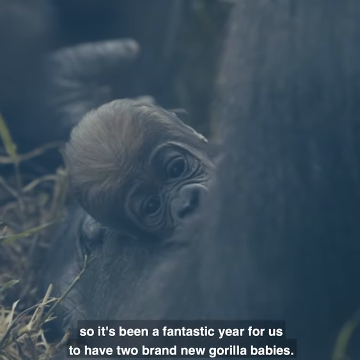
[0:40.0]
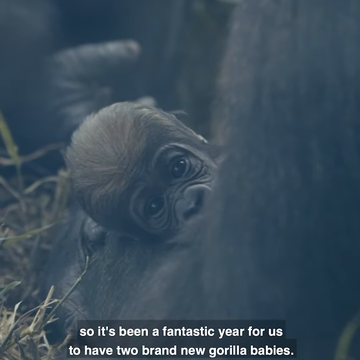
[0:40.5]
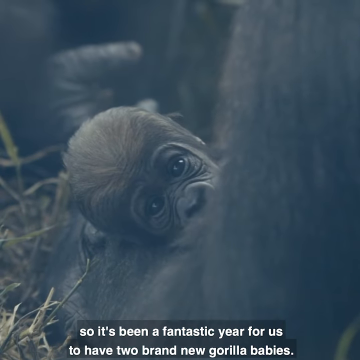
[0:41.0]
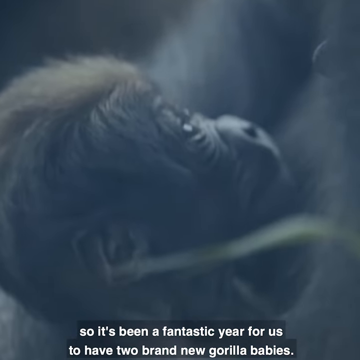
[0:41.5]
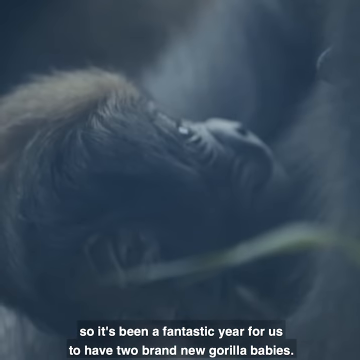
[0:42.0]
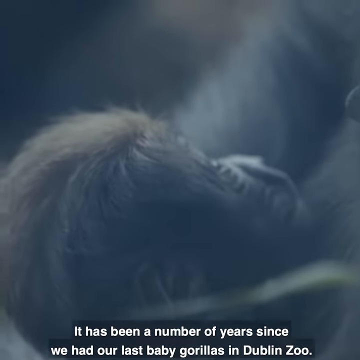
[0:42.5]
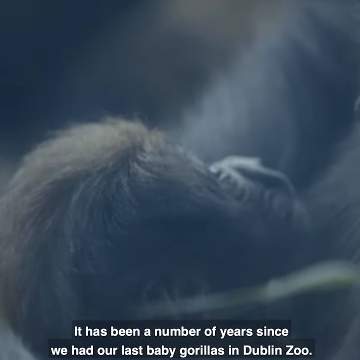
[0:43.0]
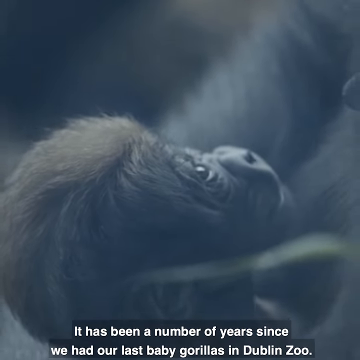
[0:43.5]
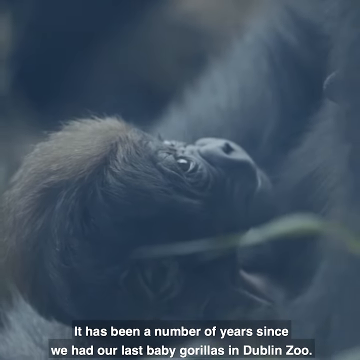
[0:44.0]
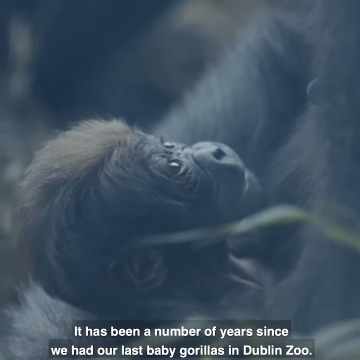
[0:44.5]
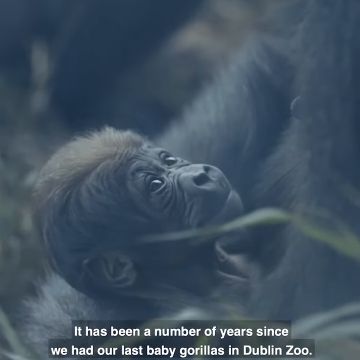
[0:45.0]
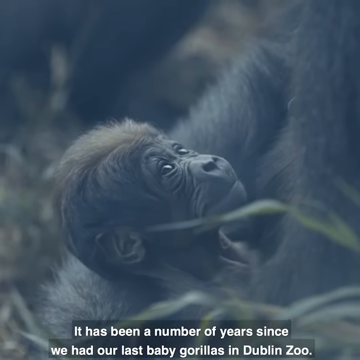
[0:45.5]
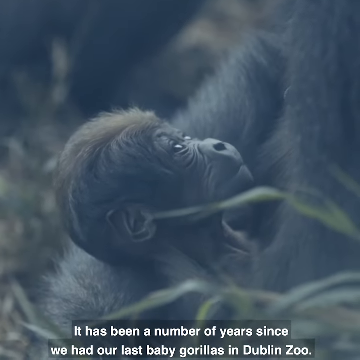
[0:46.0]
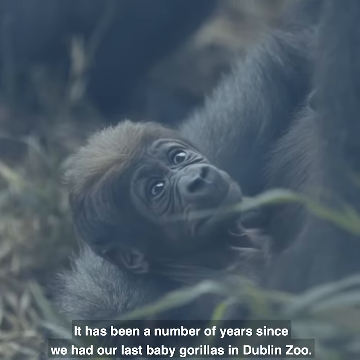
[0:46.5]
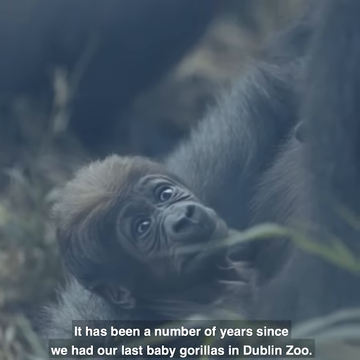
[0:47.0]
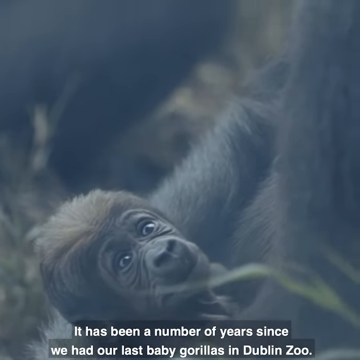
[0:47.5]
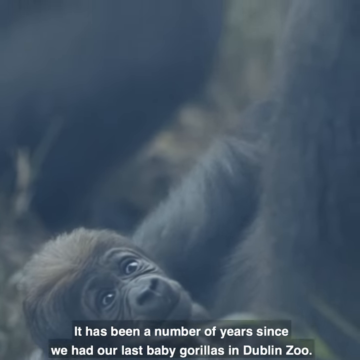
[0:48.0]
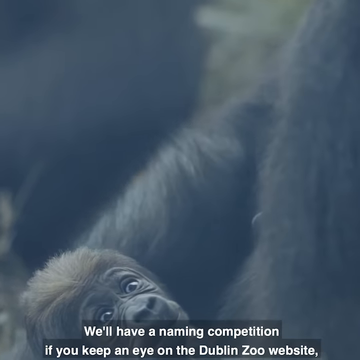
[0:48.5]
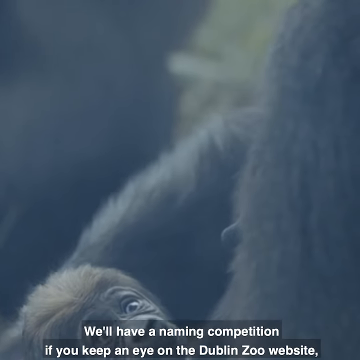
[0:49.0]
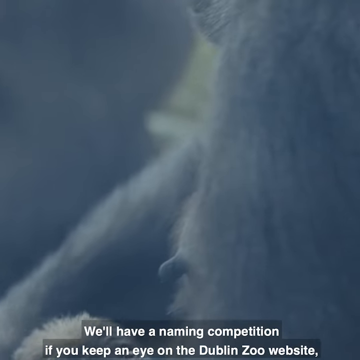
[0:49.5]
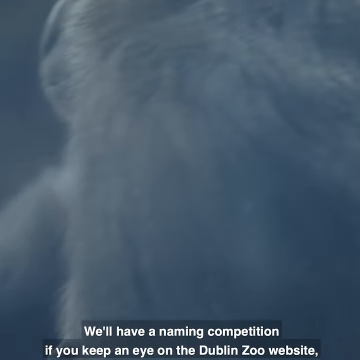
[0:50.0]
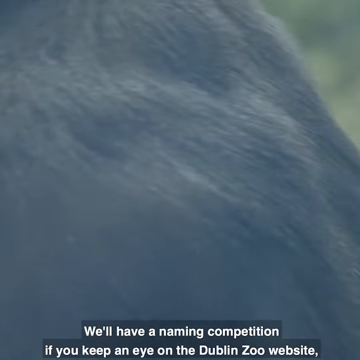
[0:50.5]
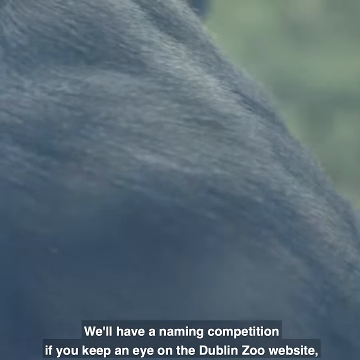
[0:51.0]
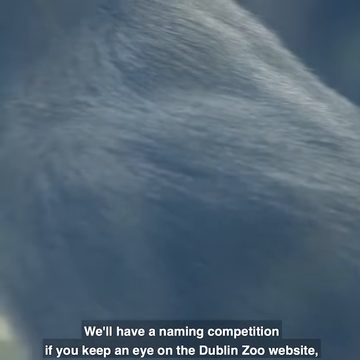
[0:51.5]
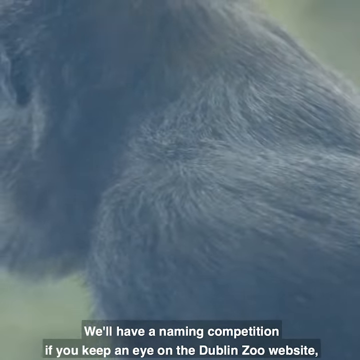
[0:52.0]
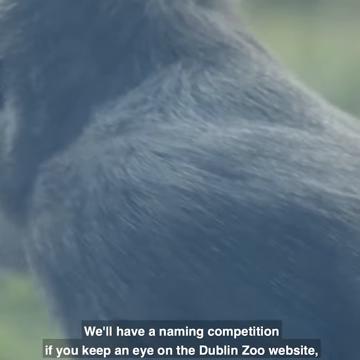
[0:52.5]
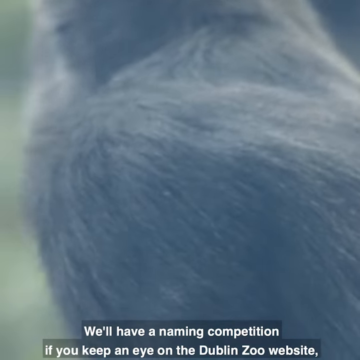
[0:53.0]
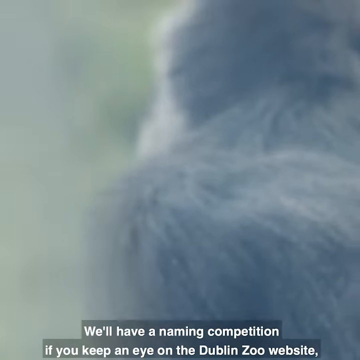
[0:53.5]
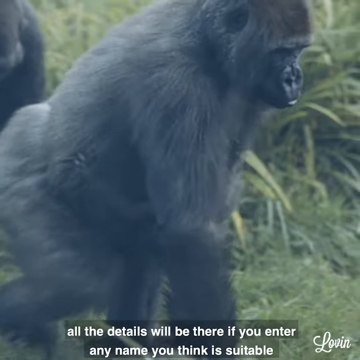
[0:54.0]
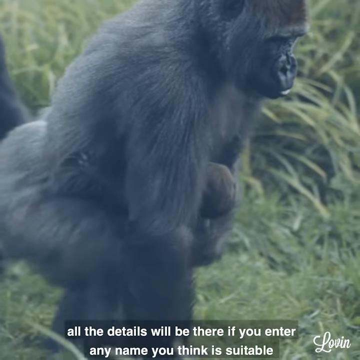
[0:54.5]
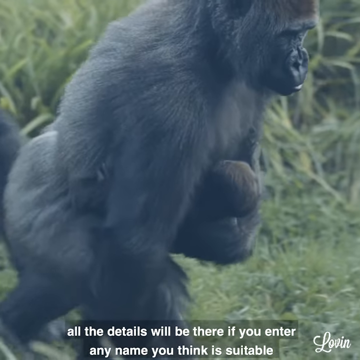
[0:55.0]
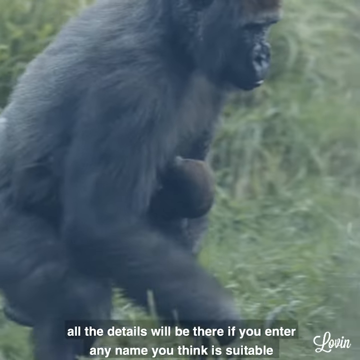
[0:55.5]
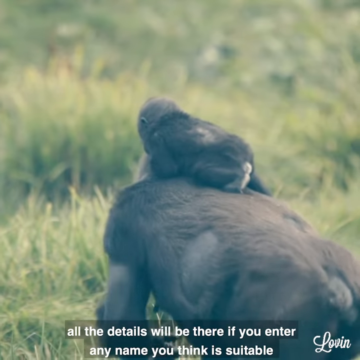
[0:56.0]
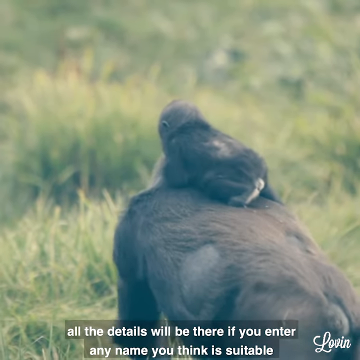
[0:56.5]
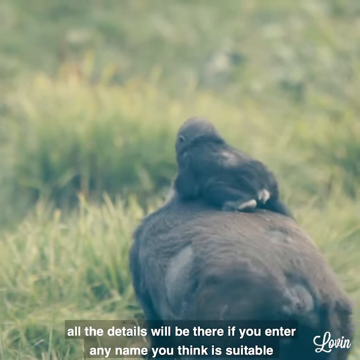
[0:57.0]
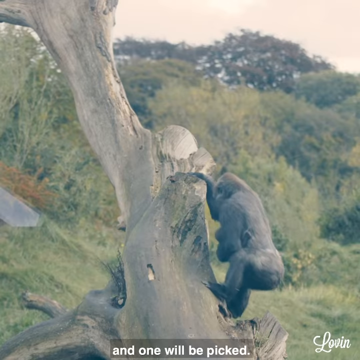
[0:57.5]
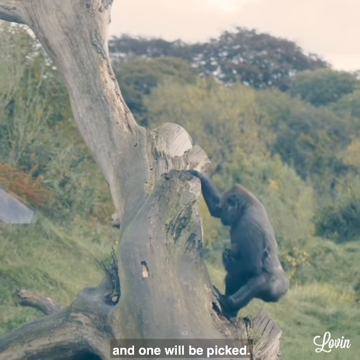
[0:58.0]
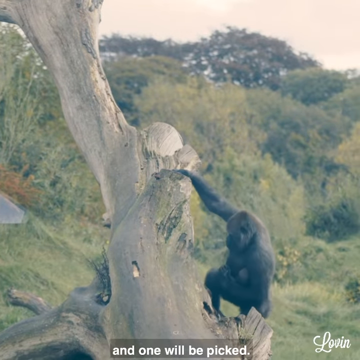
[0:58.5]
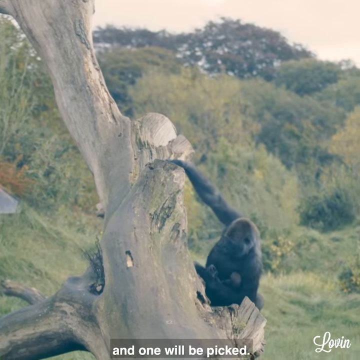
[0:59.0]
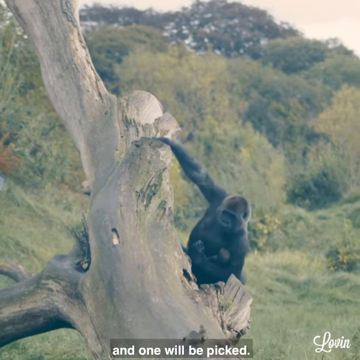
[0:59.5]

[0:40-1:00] A baby gorilla or ape, black or a little bit brown, with a flat, squished-in nose and two big eyes, nurses from its mother. Text reads "so it's been a fantastic year for us to have two brand new gorillas here. It has been a number of years since we had our last baby gorillas in Dublin Zoo," followed by "we'll have a naming competition if you keep an eye on the Dublin Zoo website. All the details will be there." An ape climbs down from what looks like a tree log kept for the animals to climb on; it looks like it doesn't have a lot of leaves. The video keeps showing shots of the gorillas, and "Dublin Zoo" appears in the upper left-hand corner. The apes' enclosure looks kind of like a jungle.